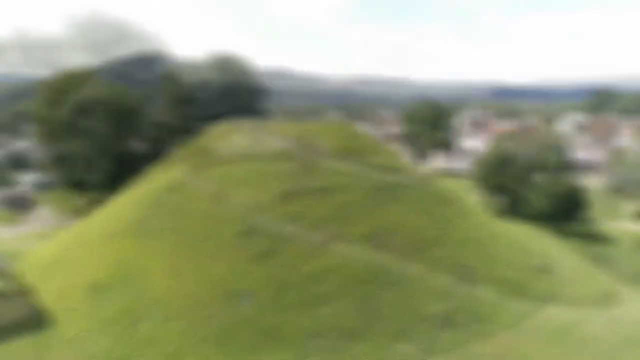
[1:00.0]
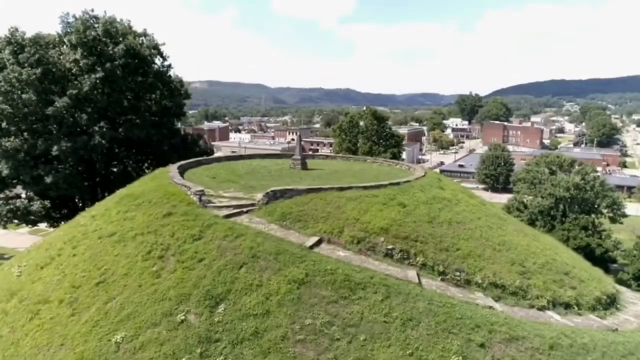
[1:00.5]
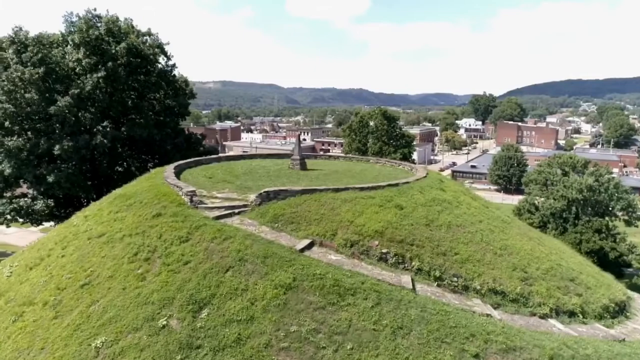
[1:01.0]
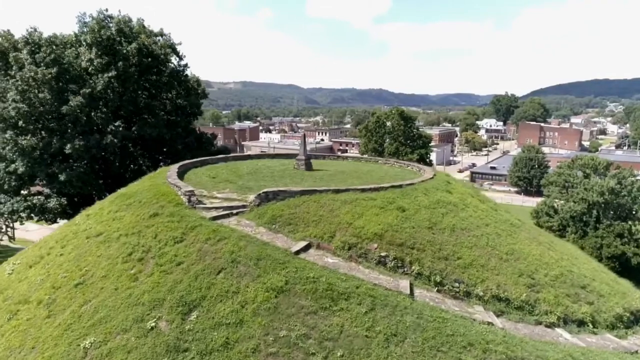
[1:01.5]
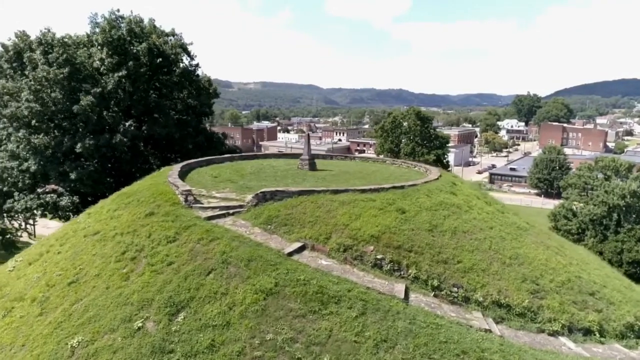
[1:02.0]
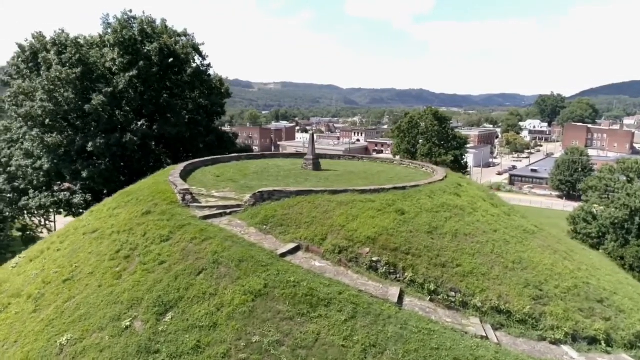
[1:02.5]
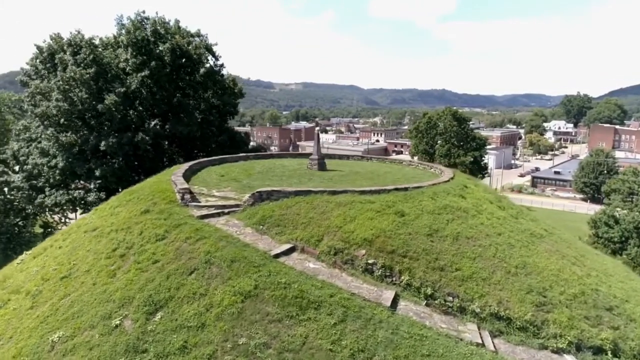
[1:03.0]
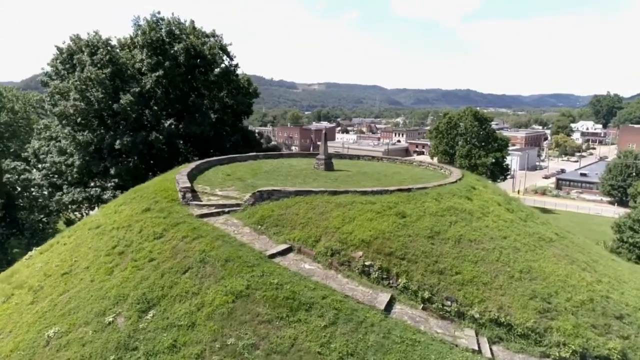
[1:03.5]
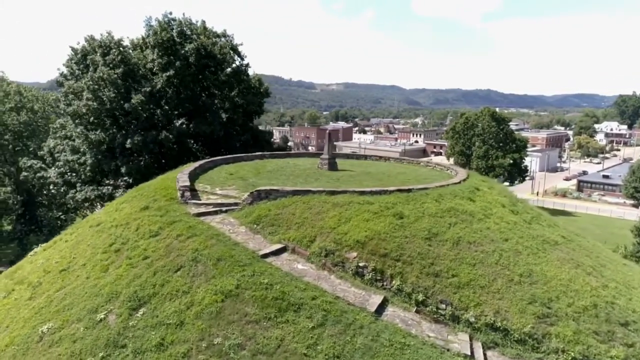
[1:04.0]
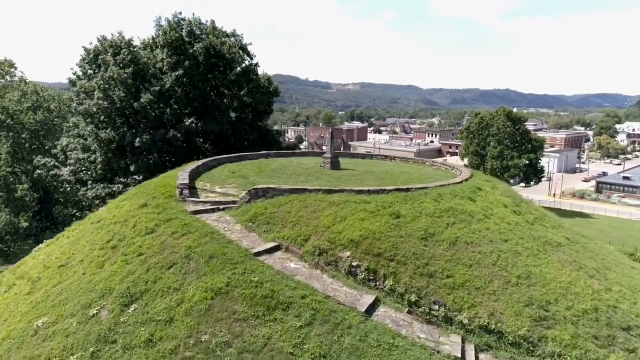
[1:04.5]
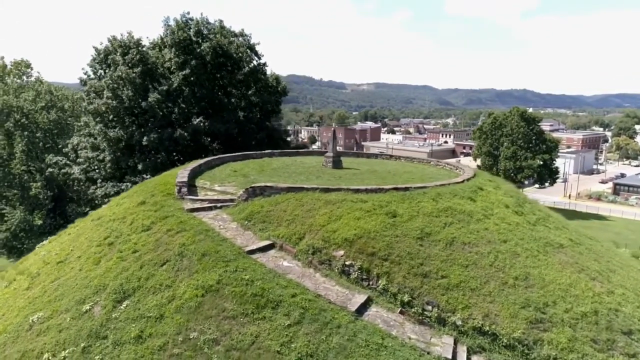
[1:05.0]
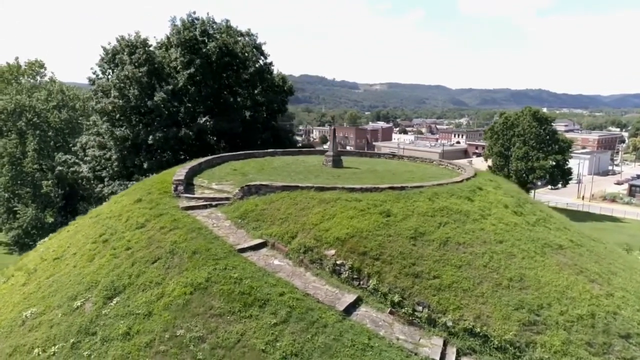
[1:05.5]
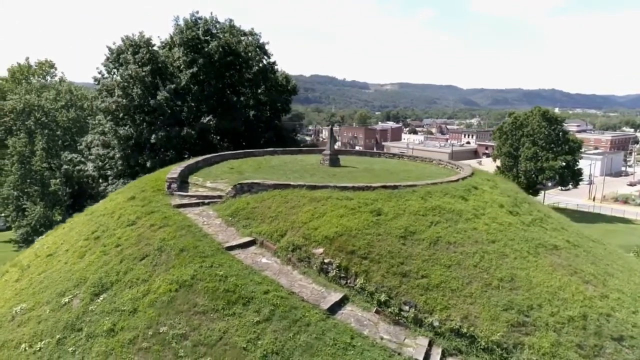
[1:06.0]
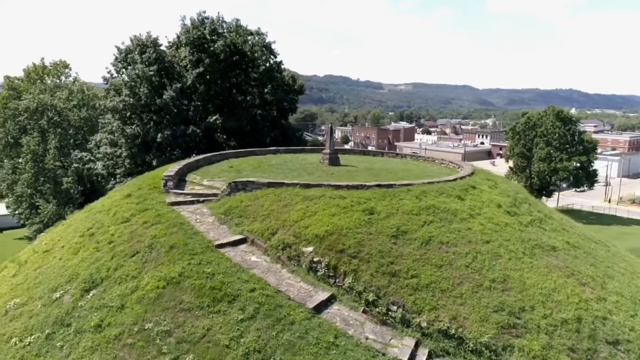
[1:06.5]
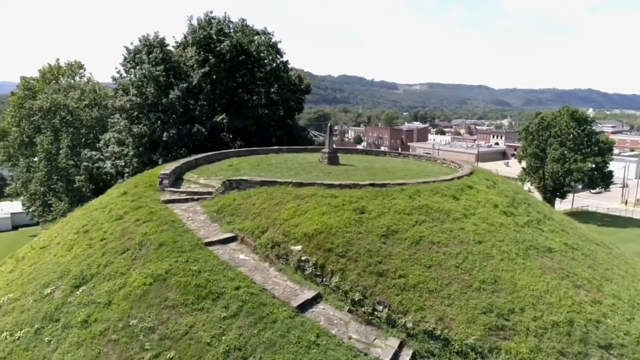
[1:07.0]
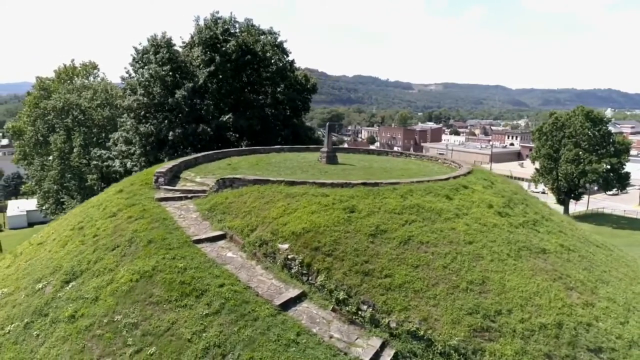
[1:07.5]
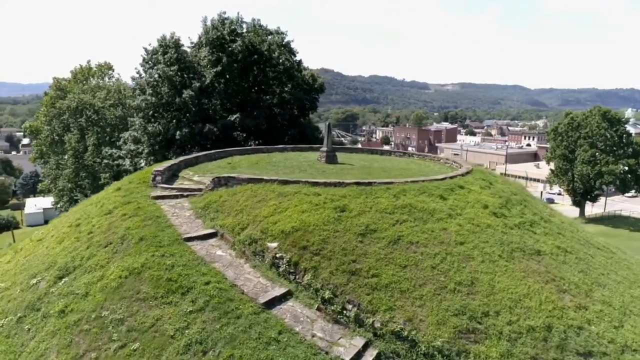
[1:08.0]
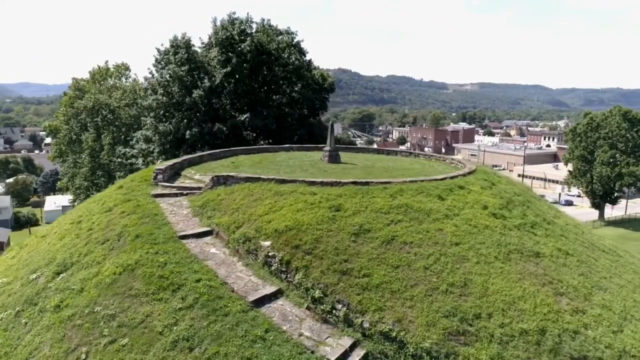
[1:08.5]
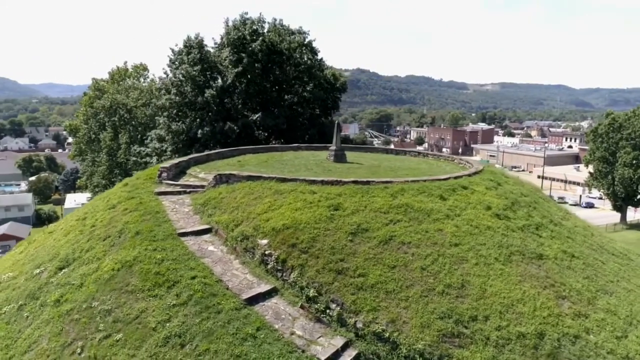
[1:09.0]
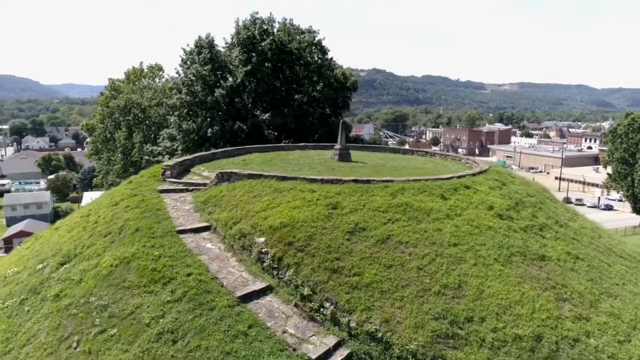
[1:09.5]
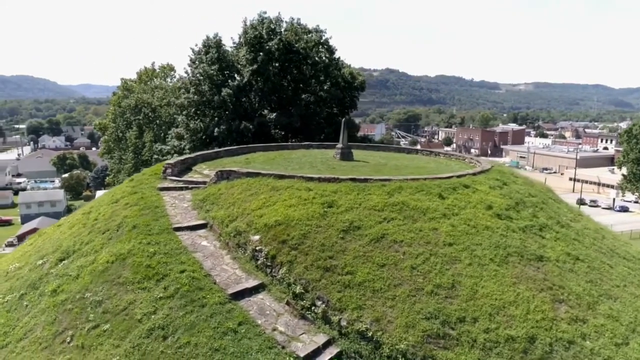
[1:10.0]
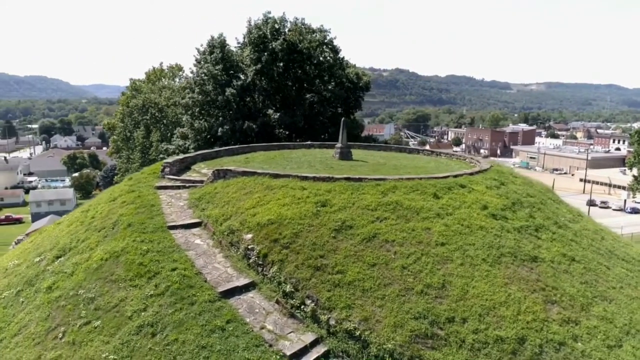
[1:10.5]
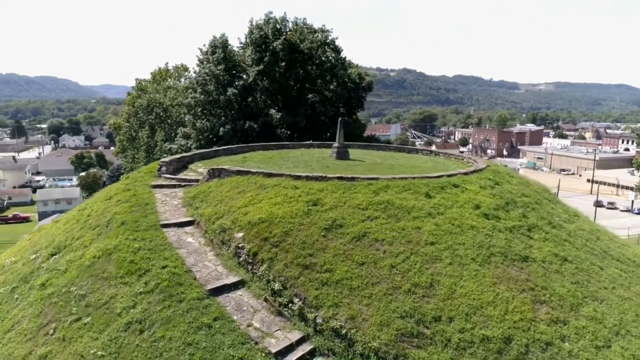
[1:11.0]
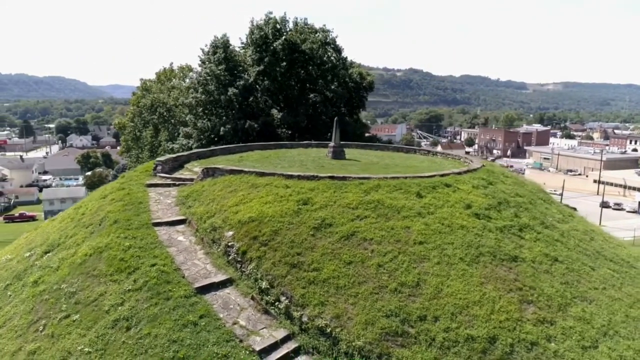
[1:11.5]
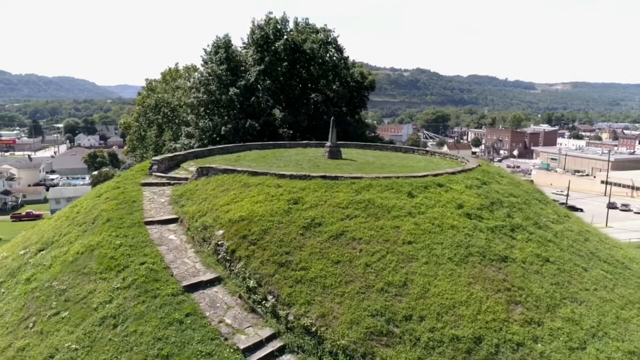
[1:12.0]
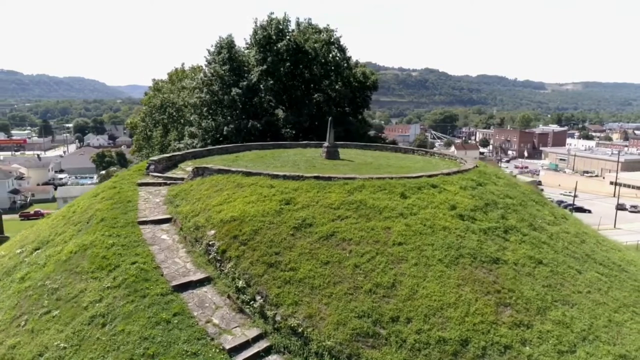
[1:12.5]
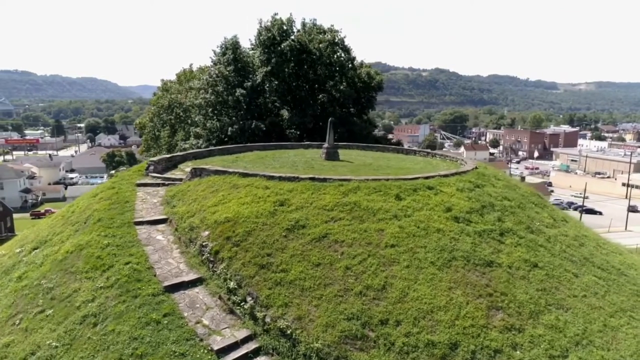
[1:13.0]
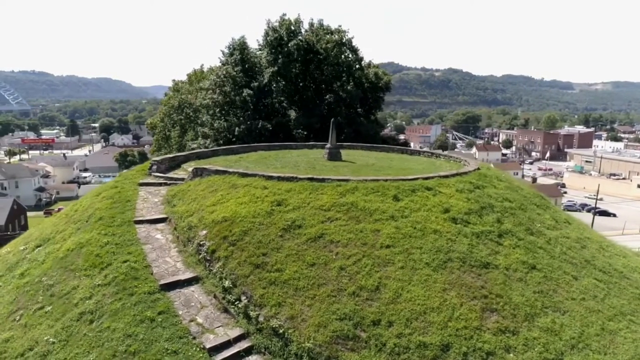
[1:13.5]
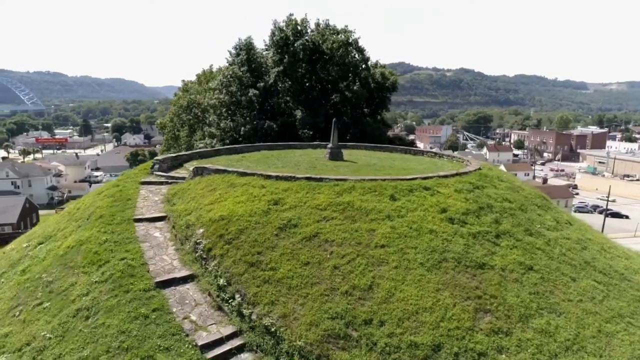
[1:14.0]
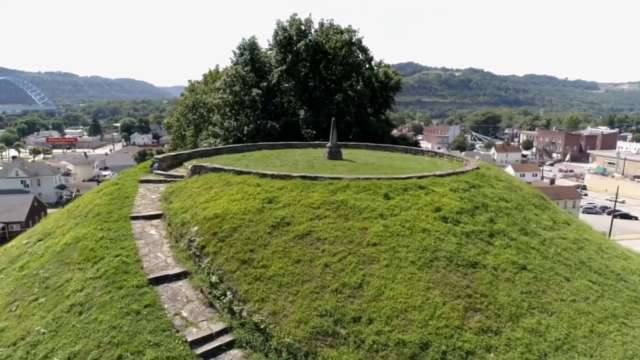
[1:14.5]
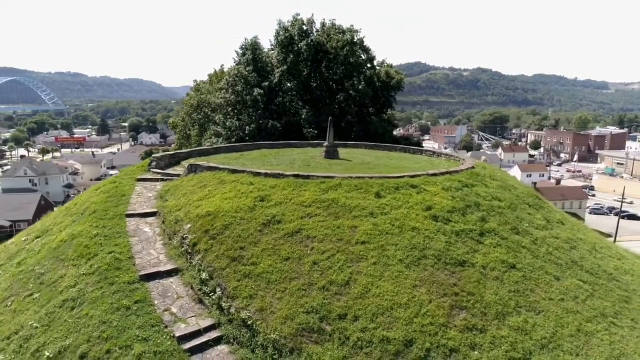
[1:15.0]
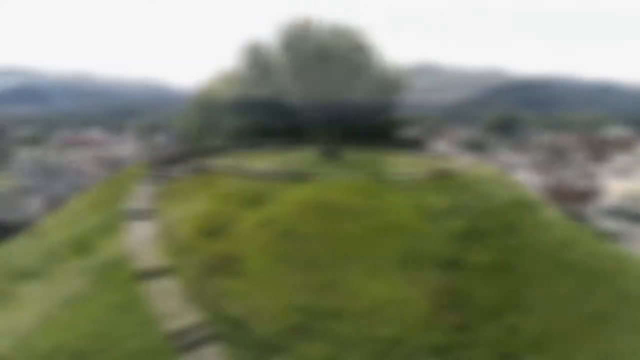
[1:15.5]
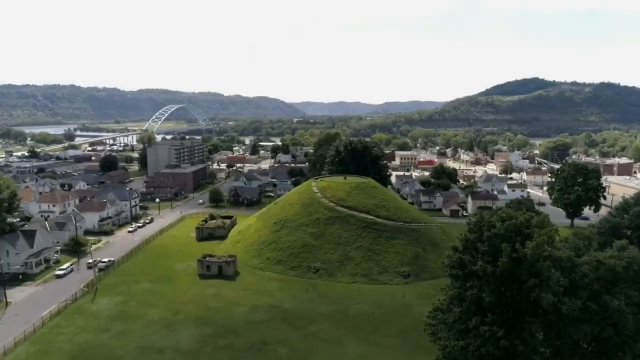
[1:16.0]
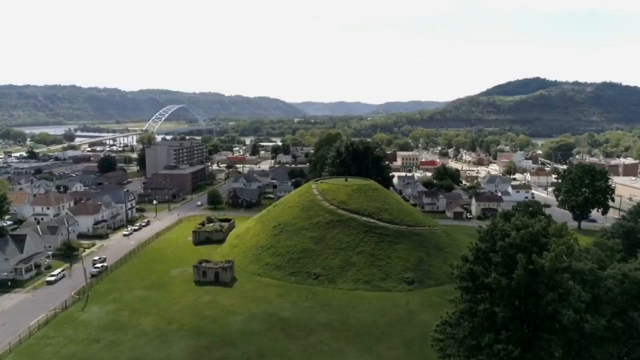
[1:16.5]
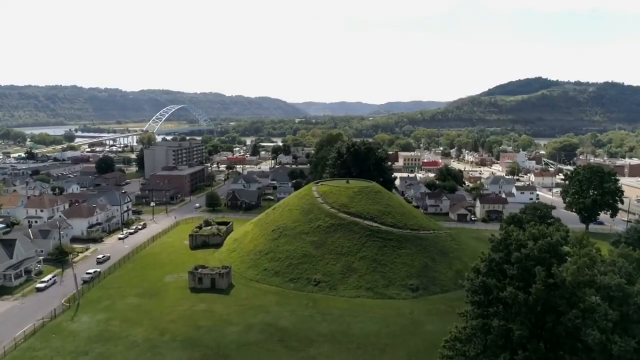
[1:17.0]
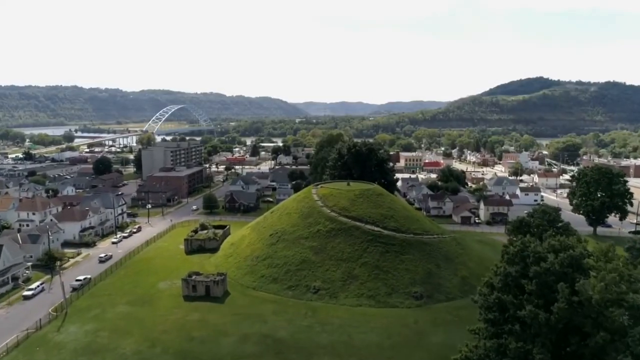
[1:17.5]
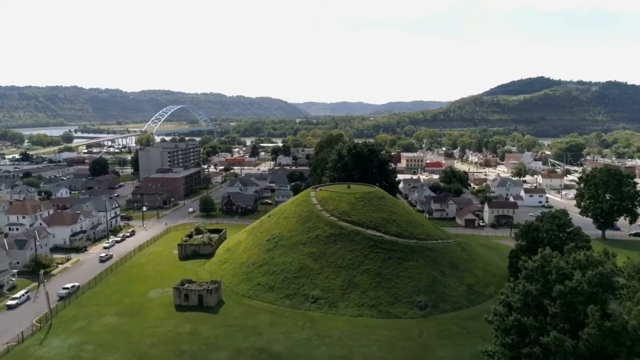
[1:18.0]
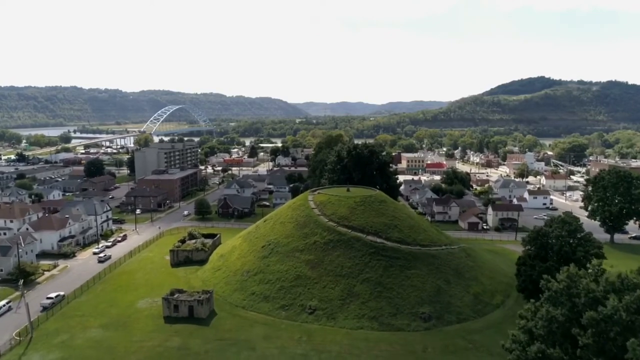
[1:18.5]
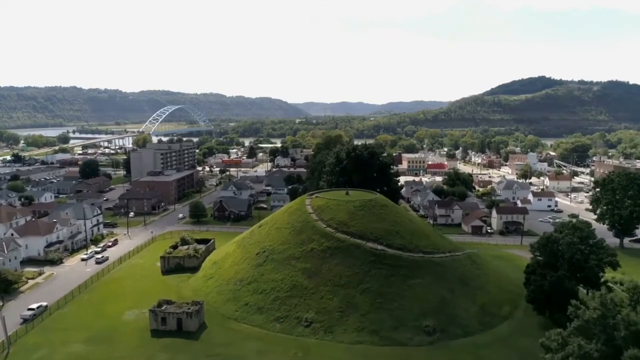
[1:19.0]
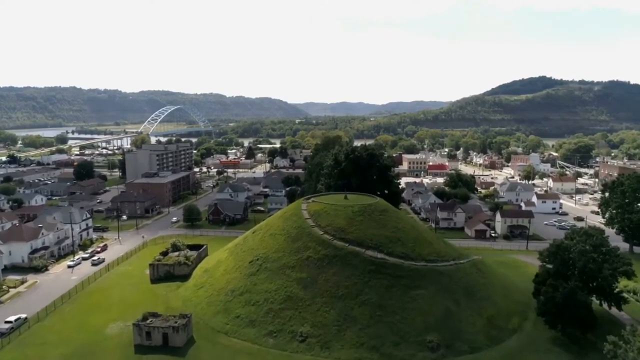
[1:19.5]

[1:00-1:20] Drone footage shows aerial shots of the area around the penitentiary. There appears to be a sort of park with a grassy mound, with a small path leading up to a monument on the very top. Around it are some roads and trees, and in the distance are hilly mountains that are very green and covered in bushes. The drone circles the mound and approaches it from a different direction. A fancy metal bridge with a curved arch is visible in the background. It is not clear what the monument on top of the mound is. A stone path winds around the mound like a corkscrew to reach the top, and there is a very small, decorative wall.